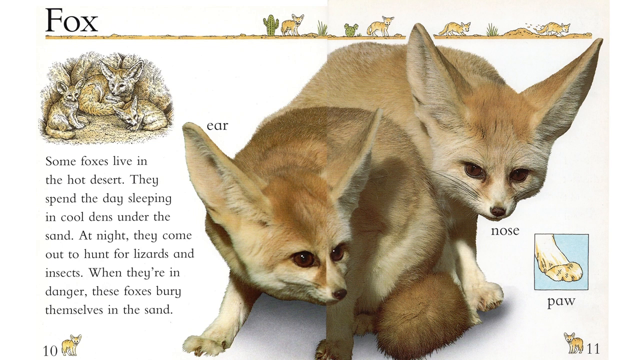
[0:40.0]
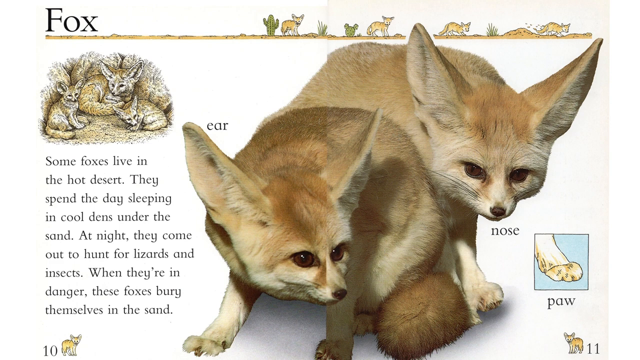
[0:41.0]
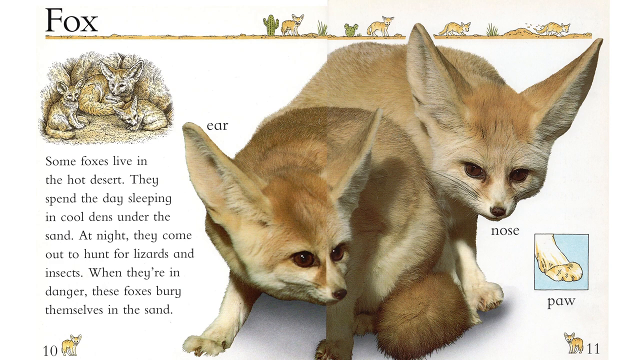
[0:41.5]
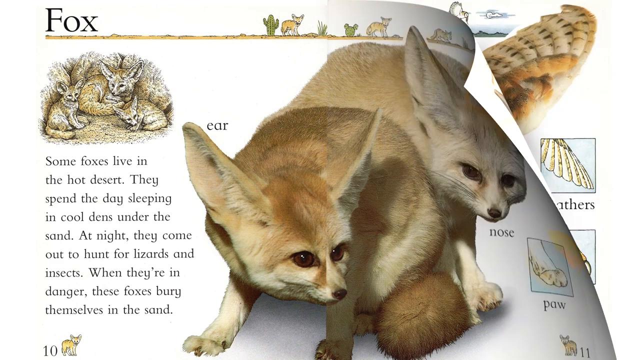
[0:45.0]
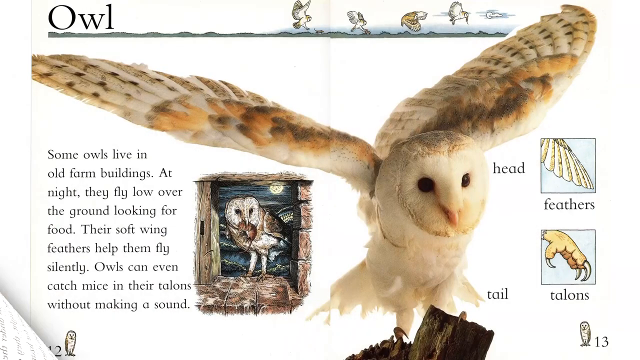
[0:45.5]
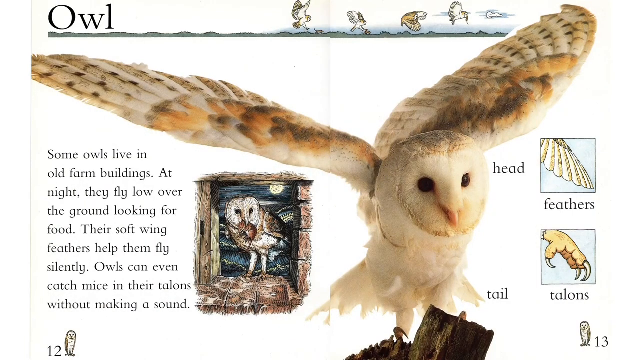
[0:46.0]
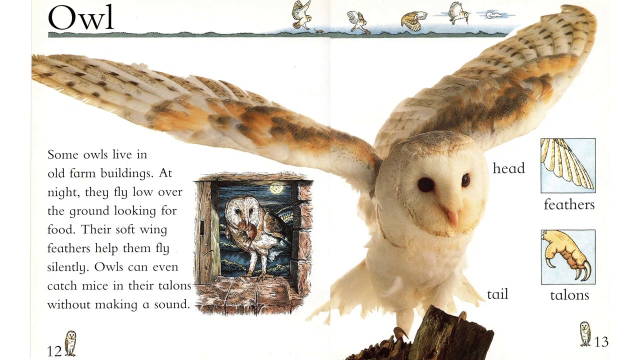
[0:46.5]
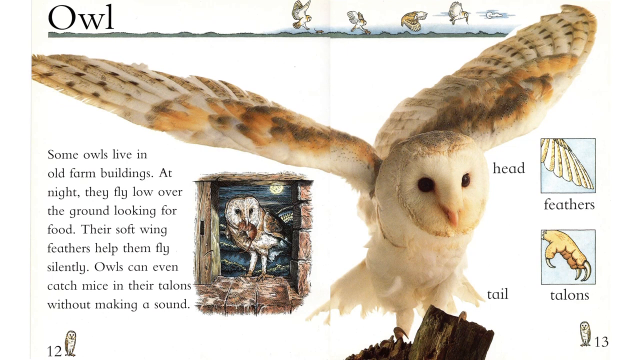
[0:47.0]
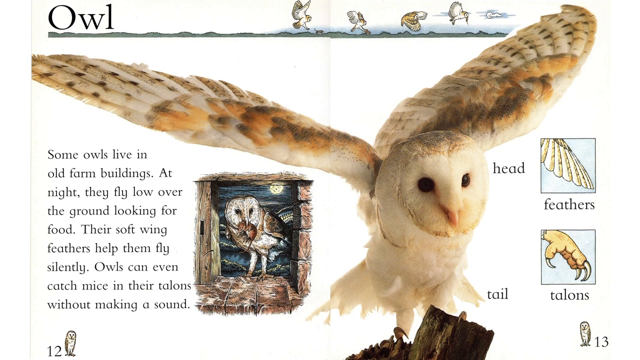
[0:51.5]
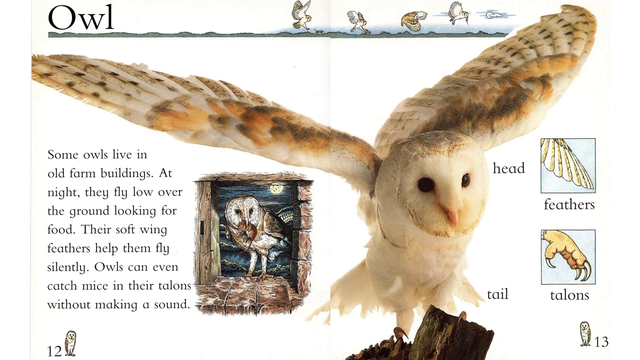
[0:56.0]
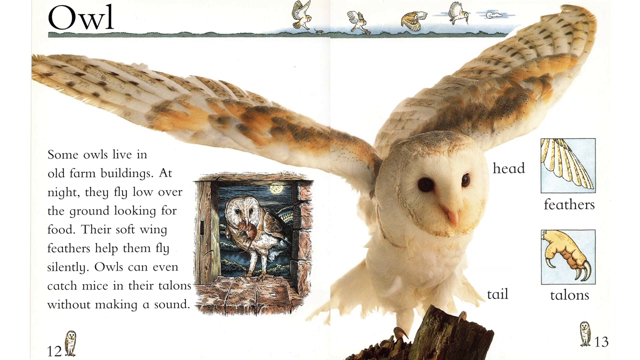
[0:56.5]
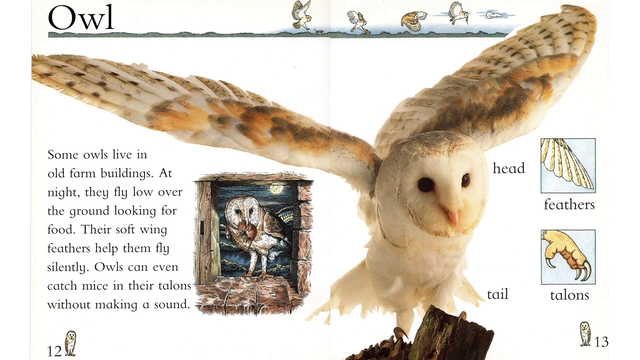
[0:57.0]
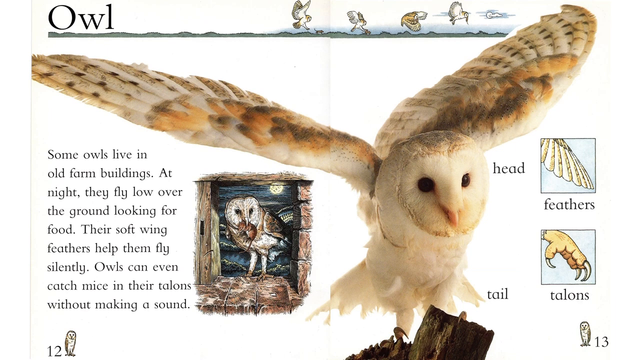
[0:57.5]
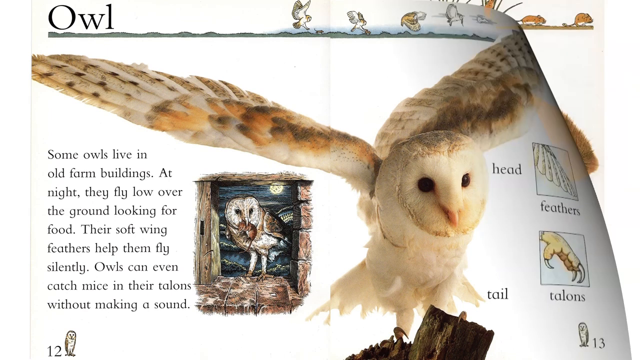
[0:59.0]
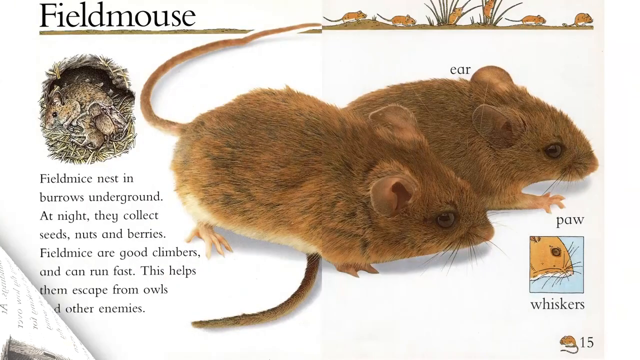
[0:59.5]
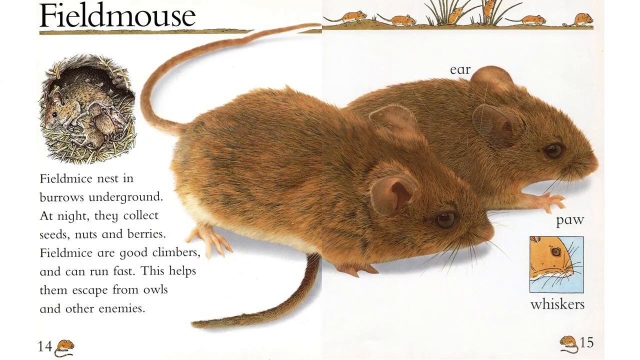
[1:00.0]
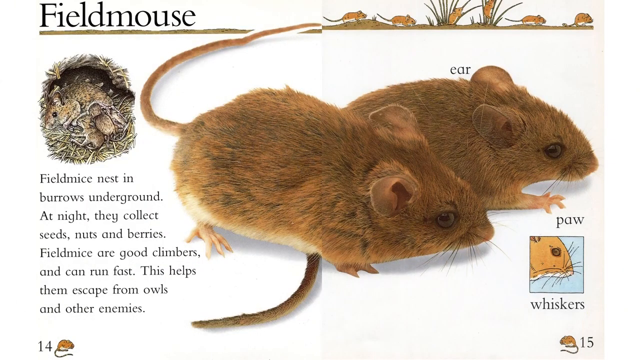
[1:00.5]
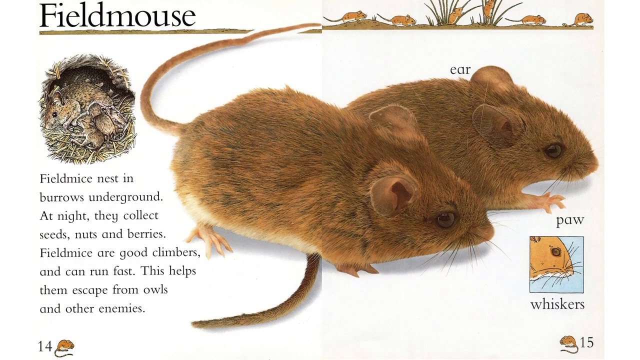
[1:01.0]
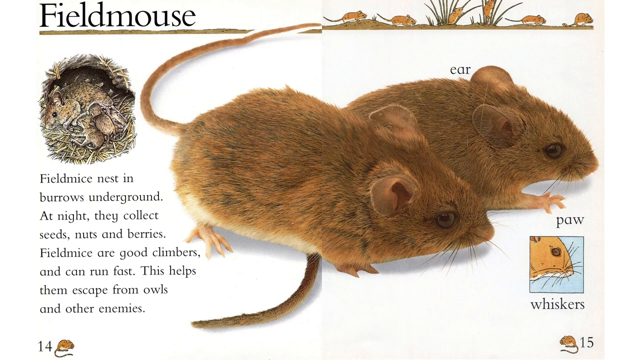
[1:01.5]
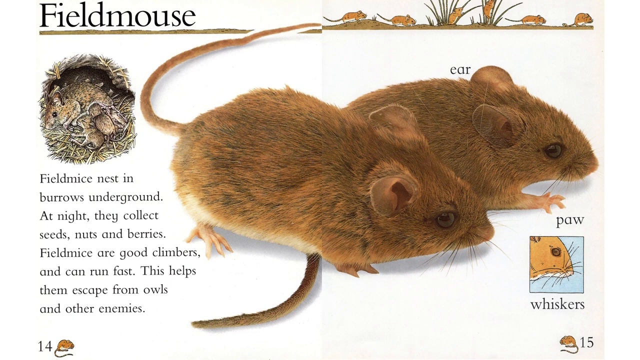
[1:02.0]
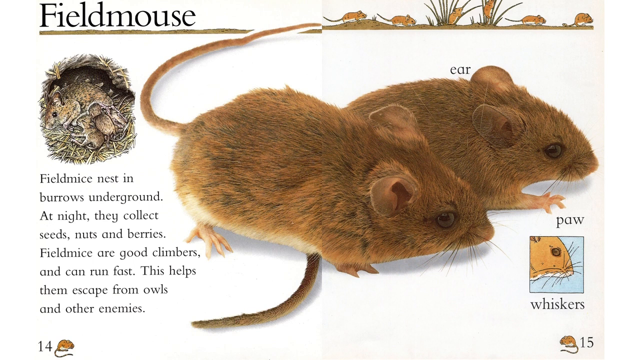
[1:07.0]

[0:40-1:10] After the fox page, the book moves on to an owl. A white owl is shown, along with a drawing of an owl sitting on a window. Labels show the owl's head, its feathers, its talons and its tail. The text reads "Some owls live in old farm buildings. At night they fly low over the ground looking for food. Their soft wing feathers help them to fly silently. Owls can even catch mice in their talons." Next comes a field mouse, with labels showing its ears and its paw.